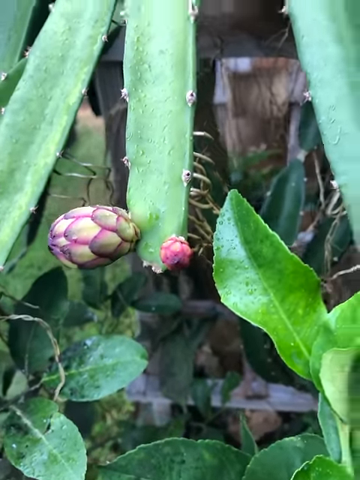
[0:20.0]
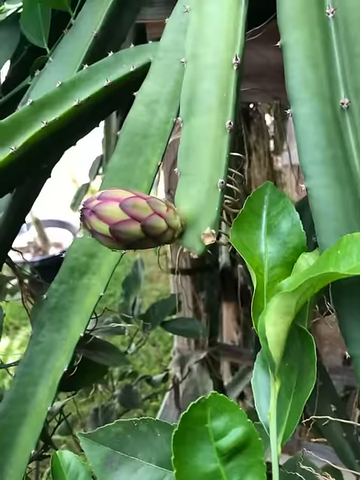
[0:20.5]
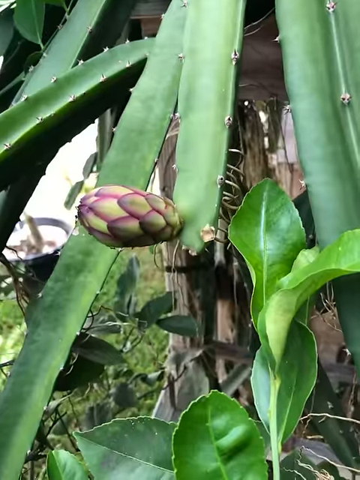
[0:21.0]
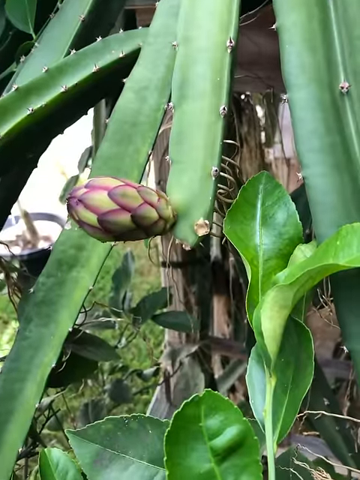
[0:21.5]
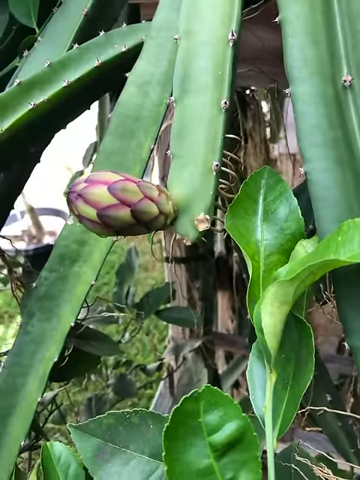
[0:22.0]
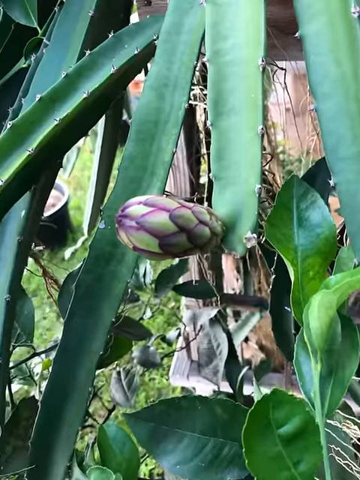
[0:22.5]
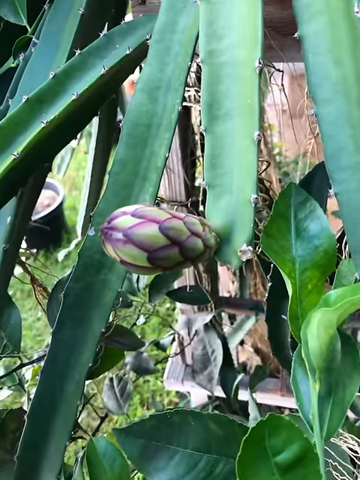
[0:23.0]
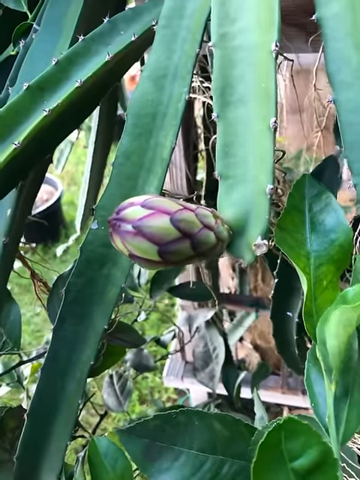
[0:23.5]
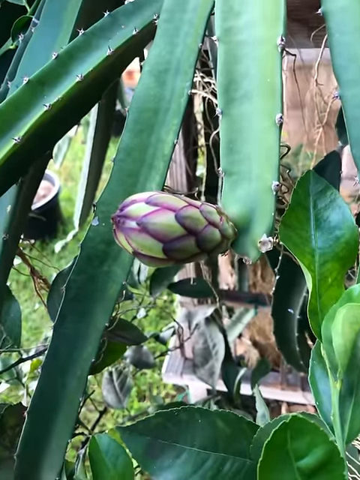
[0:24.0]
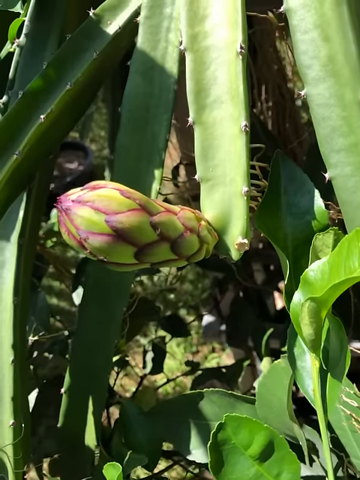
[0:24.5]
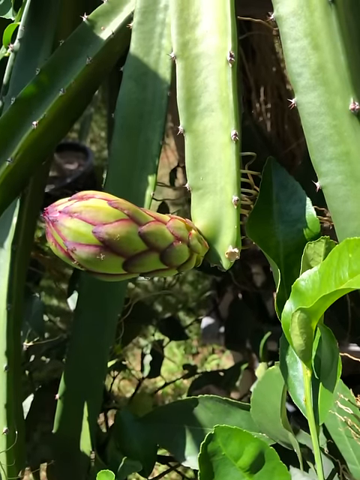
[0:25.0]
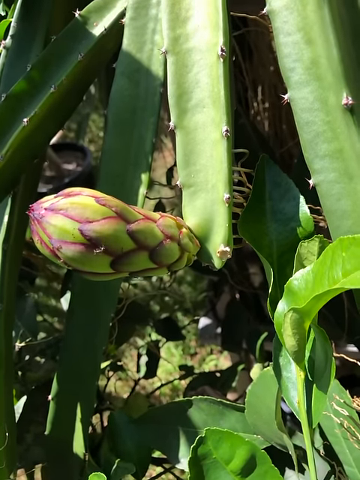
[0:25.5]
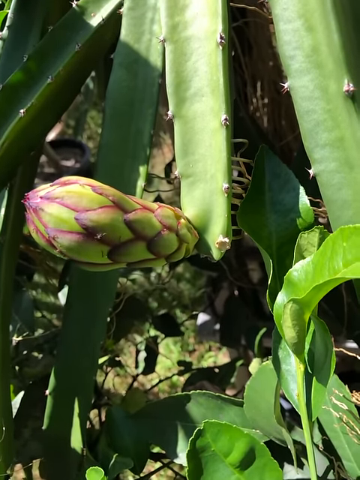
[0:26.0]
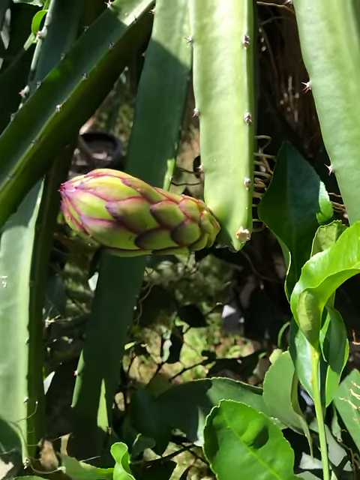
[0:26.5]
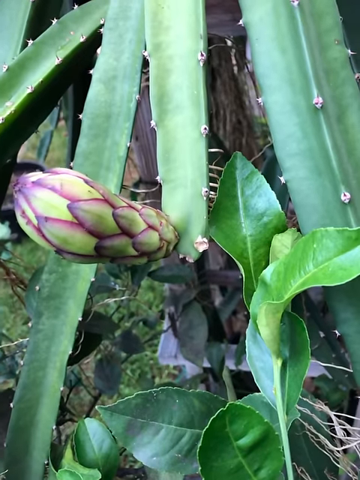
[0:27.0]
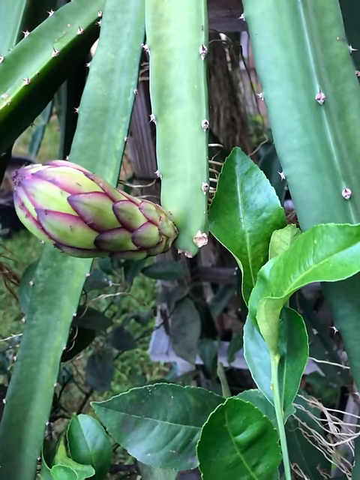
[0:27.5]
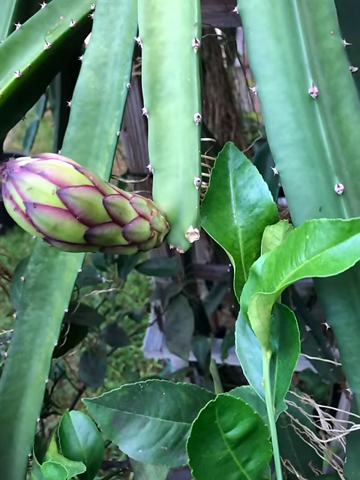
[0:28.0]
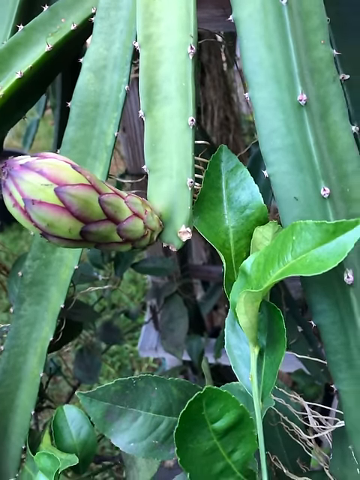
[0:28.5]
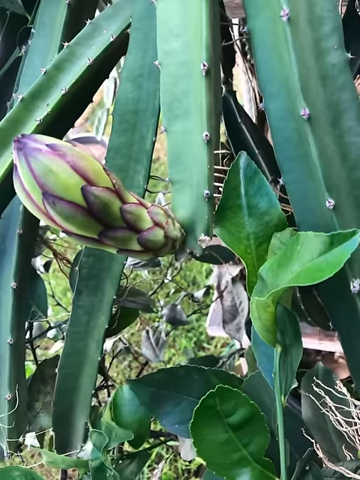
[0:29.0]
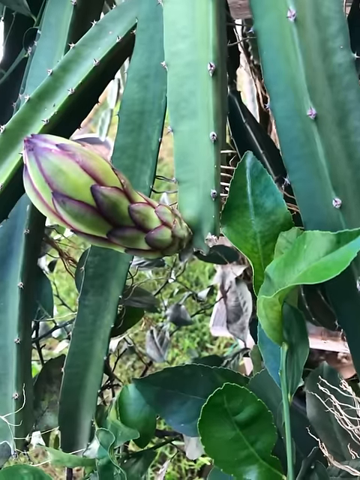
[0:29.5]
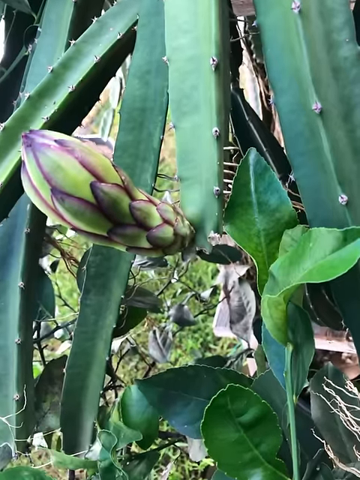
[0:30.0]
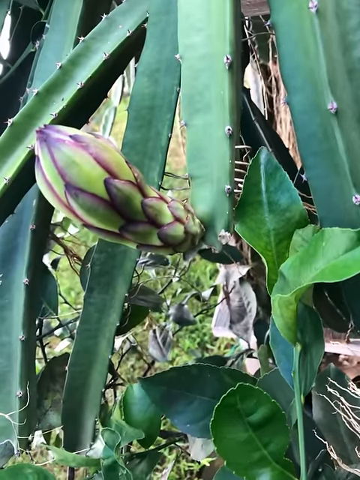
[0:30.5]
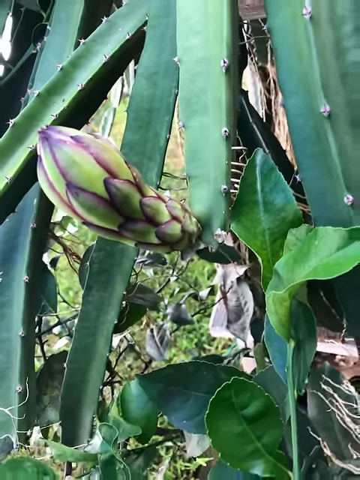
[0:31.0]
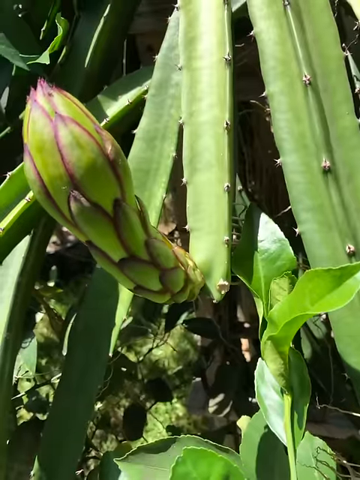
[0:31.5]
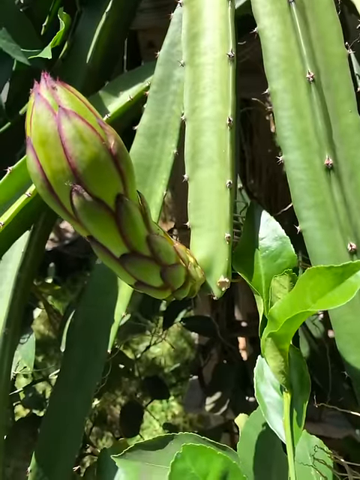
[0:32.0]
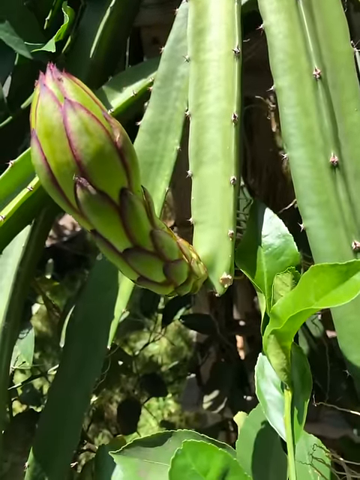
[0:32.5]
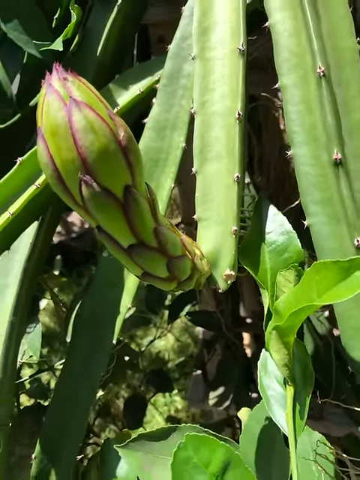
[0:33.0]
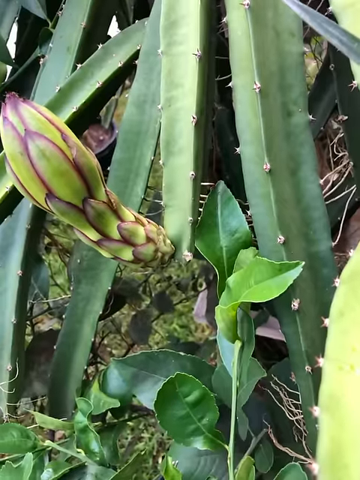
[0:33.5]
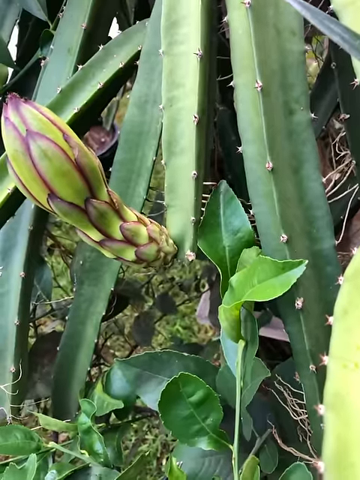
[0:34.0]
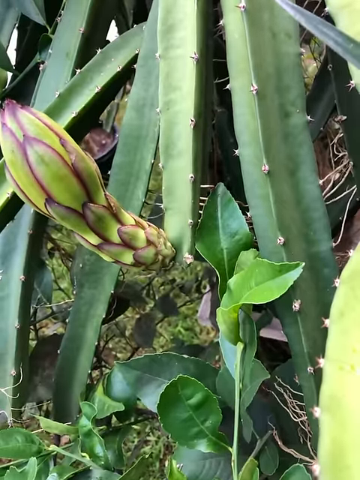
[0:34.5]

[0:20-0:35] A series of short videos appears to be made to look like a time-lapse of a plant, part of which grows very long. The plant is somewhat waxy, like a succulent, with very small possible spines down two sides, though they are so short that it is not clear. The parts that hang down come over a fence that looks to be rusted metal, like an iron fence bent into shape, possibly to keep the parts of the plant upwards. Leaves of a plant grow upwards from the bottom as well, also slightly waxy. The main leaf the camera focuses on has one large protruding part that is partly purple and partly green, with a scale-like shape similar to a dragon fruit; the edges are very purple, and the center has a gradient that goes to green. It protrudes more and more towards the camera and then starts to arc left and upwards towards the sun. At one point several ants are crawling on it; in the next shot only a few ants are crawling on it, and after that the ants can't really be seen.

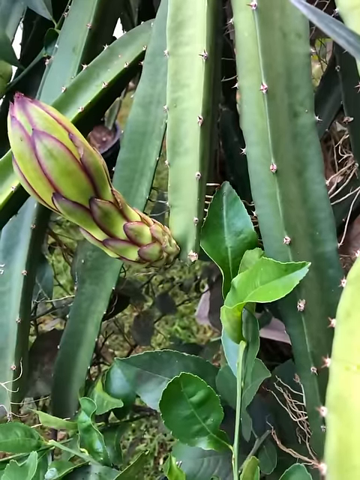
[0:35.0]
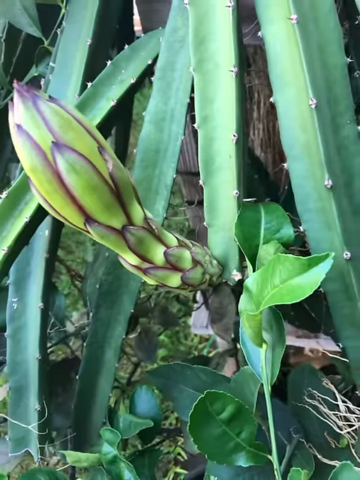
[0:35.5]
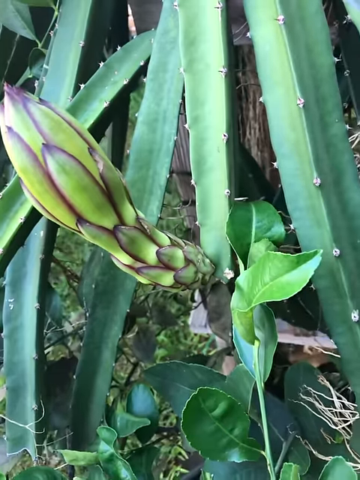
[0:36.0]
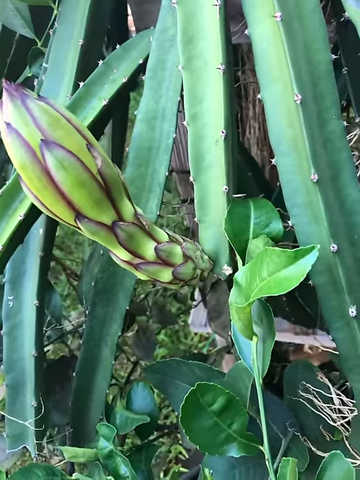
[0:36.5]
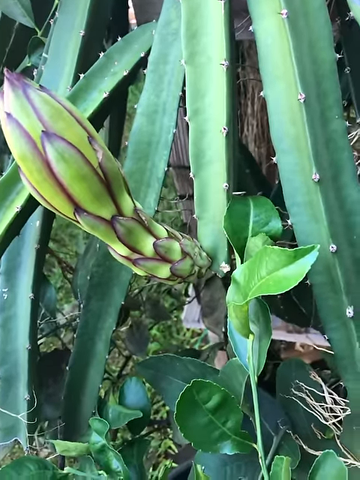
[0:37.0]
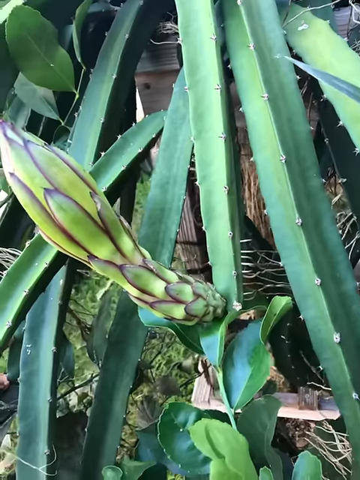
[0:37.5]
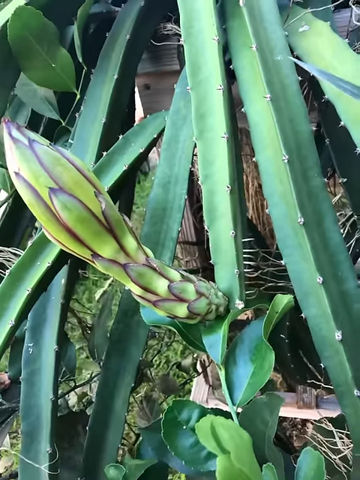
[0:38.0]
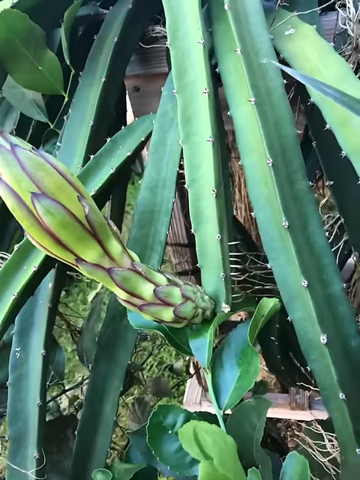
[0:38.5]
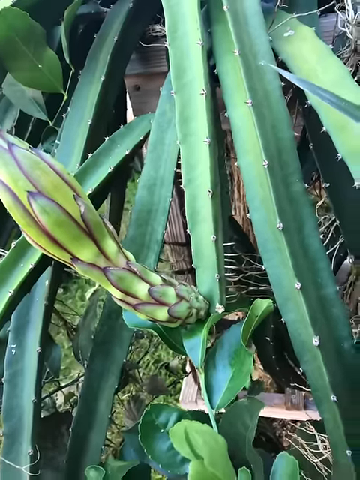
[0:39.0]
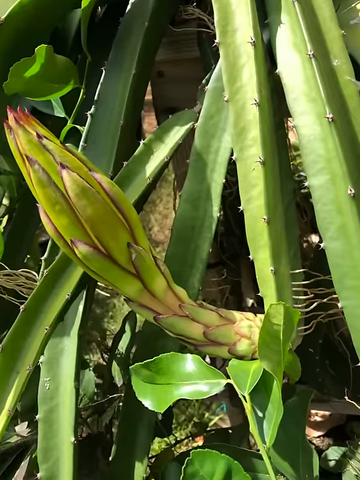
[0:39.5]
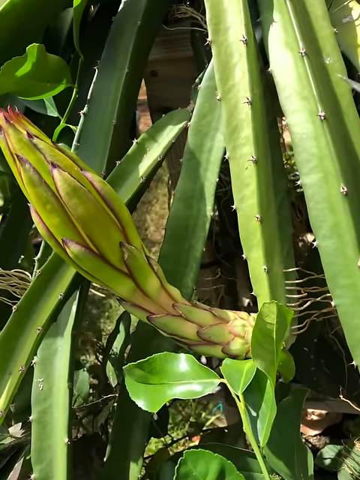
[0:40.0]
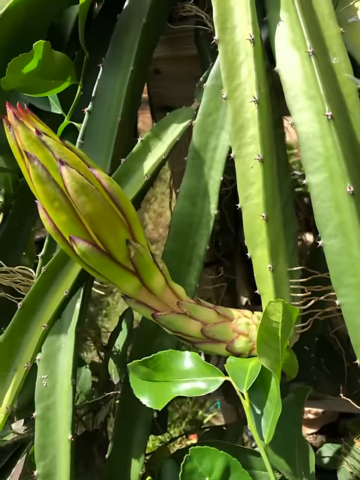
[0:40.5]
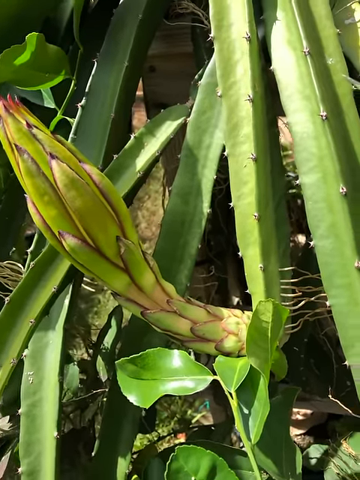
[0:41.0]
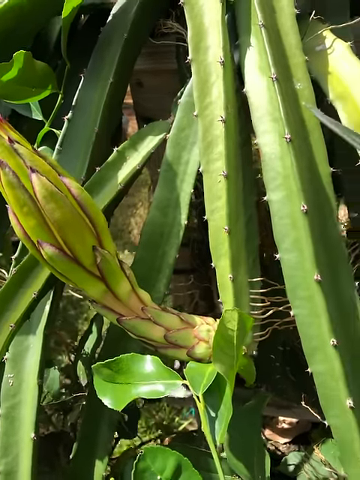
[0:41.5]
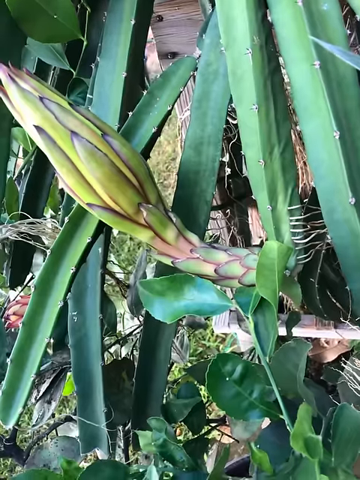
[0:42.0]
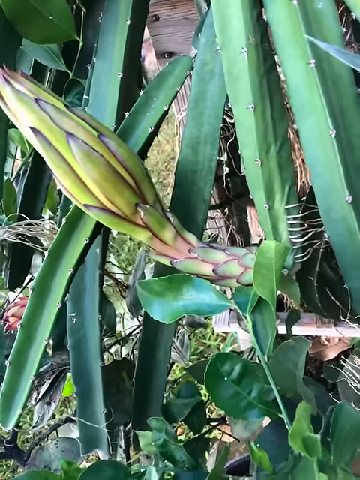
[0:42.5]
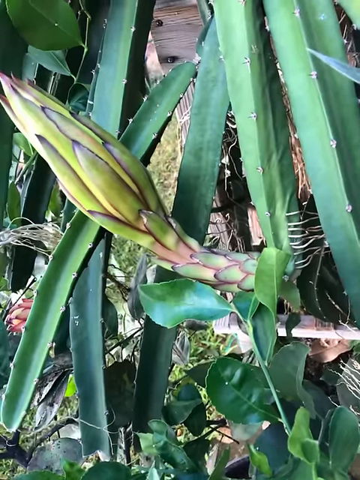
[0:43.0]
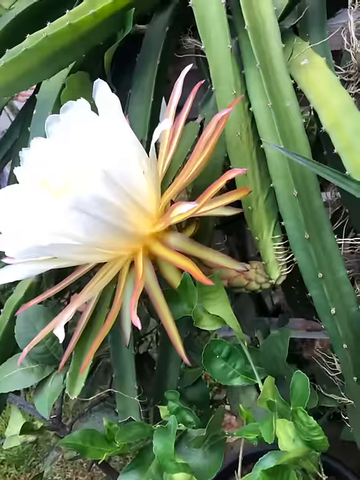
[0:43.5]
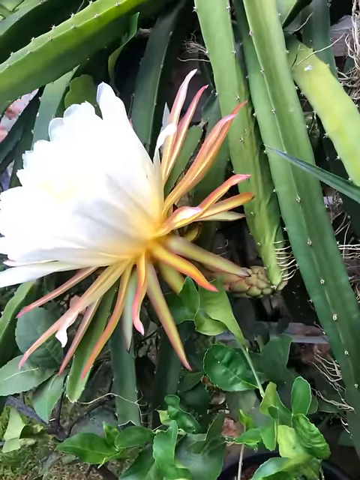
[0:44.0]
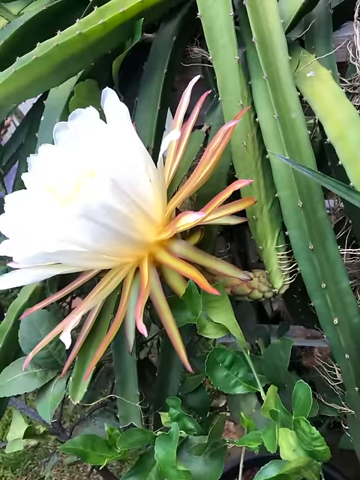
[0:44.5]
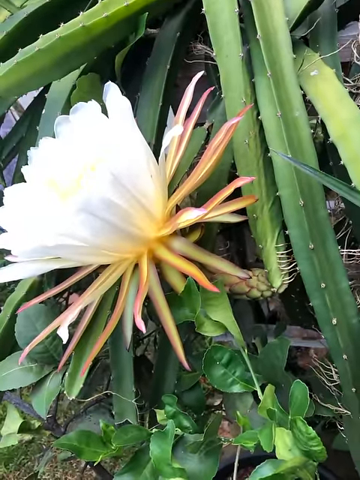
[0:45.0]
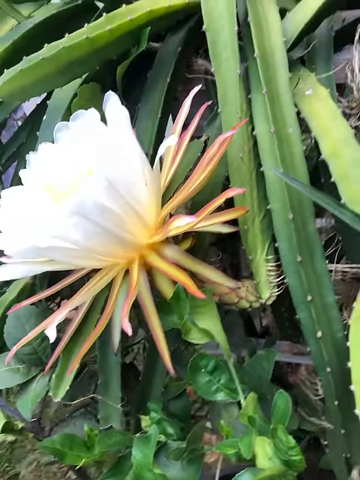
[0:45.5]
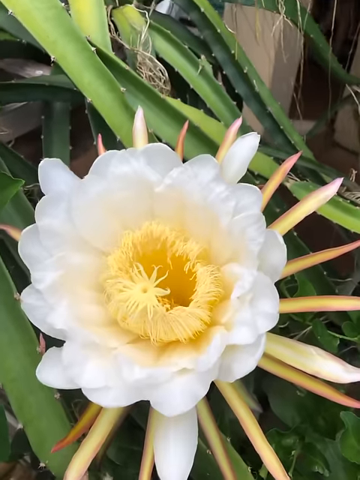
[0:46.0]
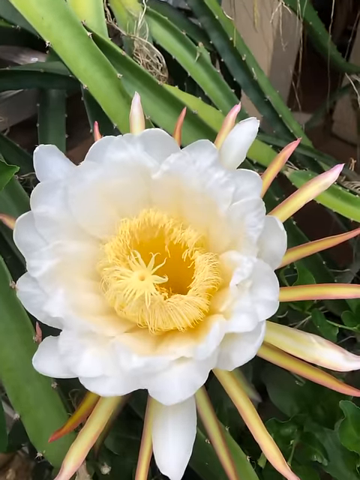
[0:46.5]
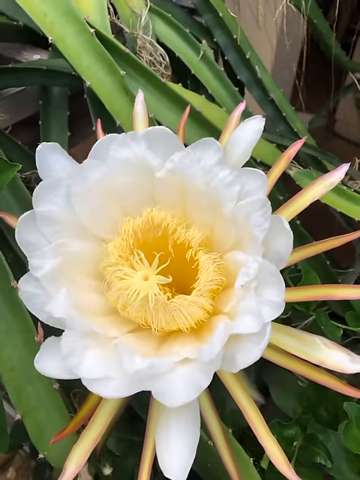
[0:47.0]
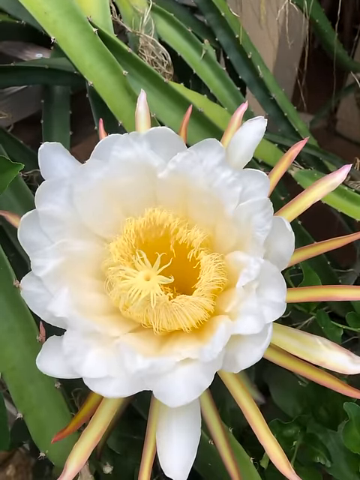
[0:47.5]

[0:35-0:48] Several short video clips are made to look like a time-lapse of a plant growing. The plant has several long parts that droop down, only slightly waxy like a succulent, with what appear to be incredibly small spines on two sides, though they are hard to see and might not be spines. A single plant grows up from the bottom and also looks quite waxy. There are a lot of plants in the background, but also a lot of brown. The focus is one part protruding from one of the drooping plant parts; it is very long and bulbous on the far end, with what look like scales, like a fish or a dragon. The scales are dark purple on the edges and green in the center, and they get greener over time. Then suddenly the bulb has opened, with several spike-like petals coming out and several white petals growing out in a cone shape from the center. Finally the full bloomed flower is shown: very white, with yellow parts in the middle and petals extending all around it.